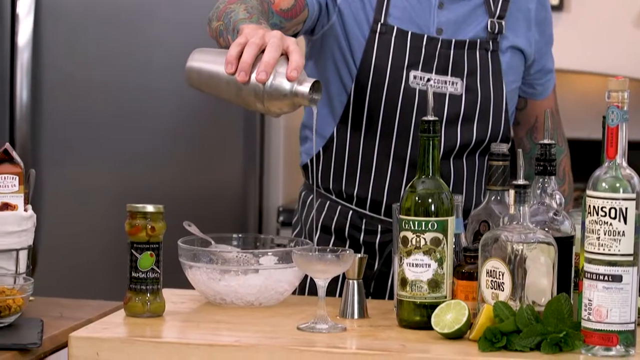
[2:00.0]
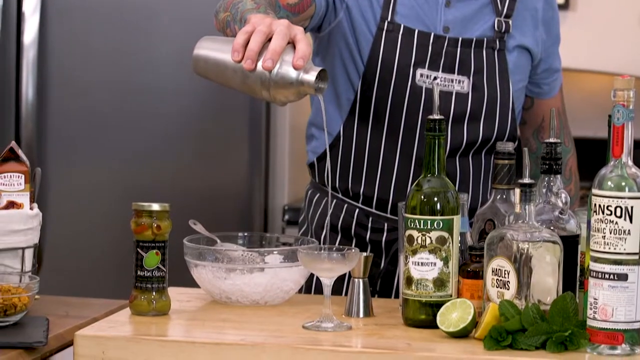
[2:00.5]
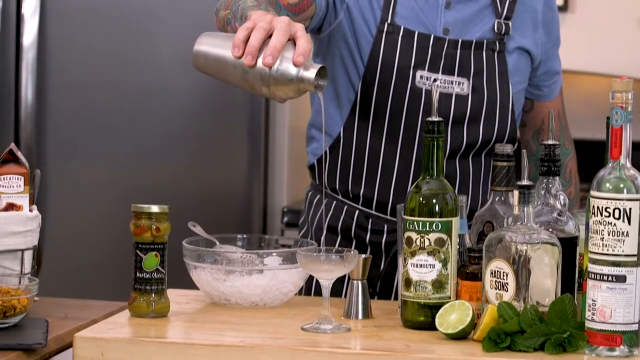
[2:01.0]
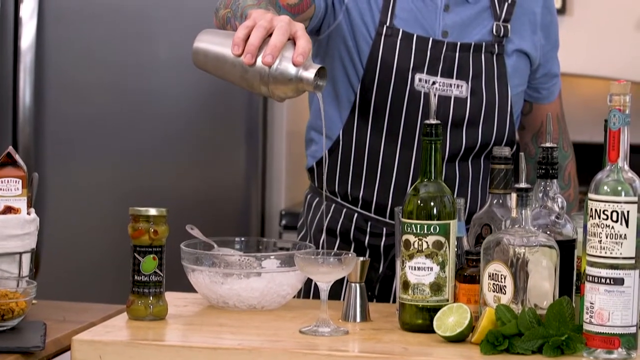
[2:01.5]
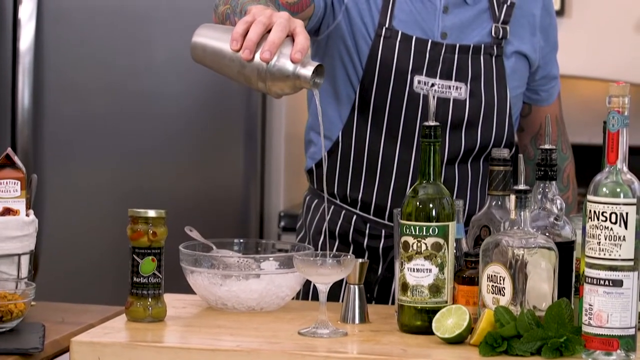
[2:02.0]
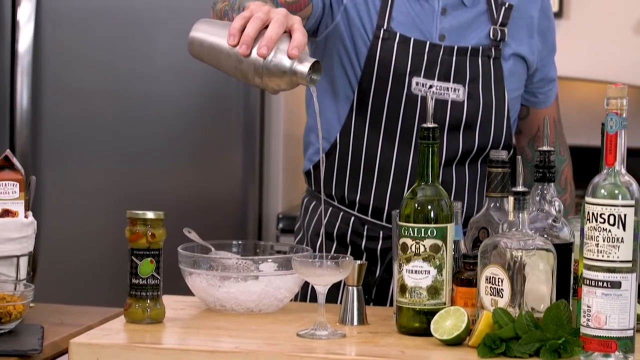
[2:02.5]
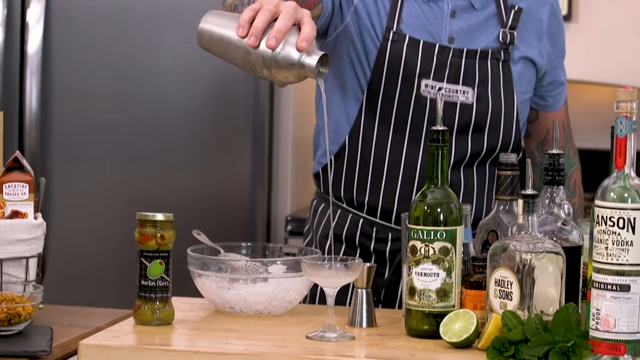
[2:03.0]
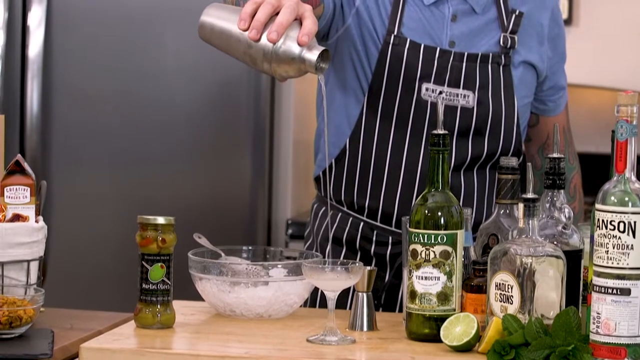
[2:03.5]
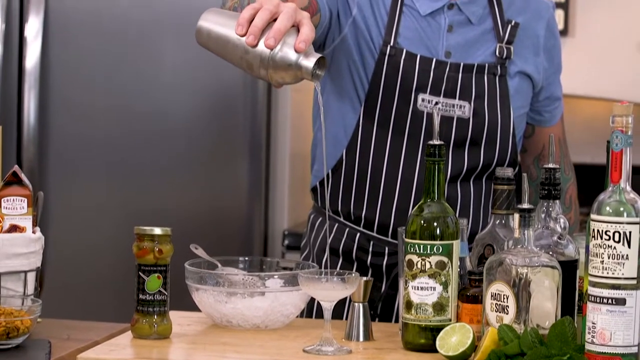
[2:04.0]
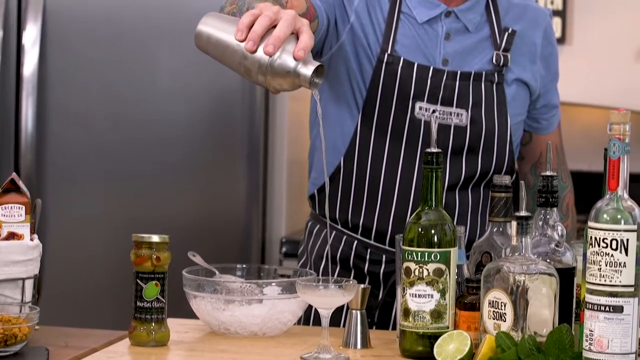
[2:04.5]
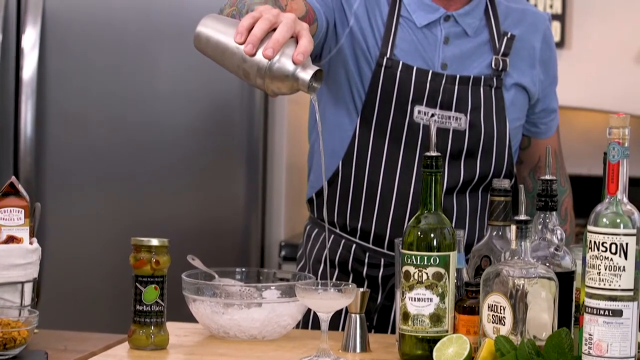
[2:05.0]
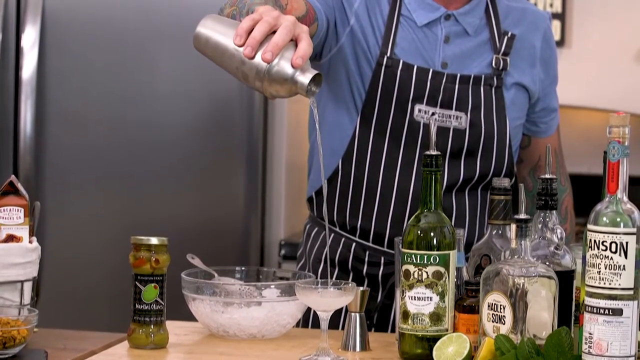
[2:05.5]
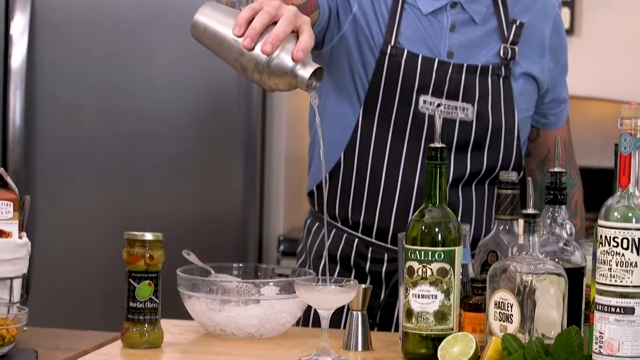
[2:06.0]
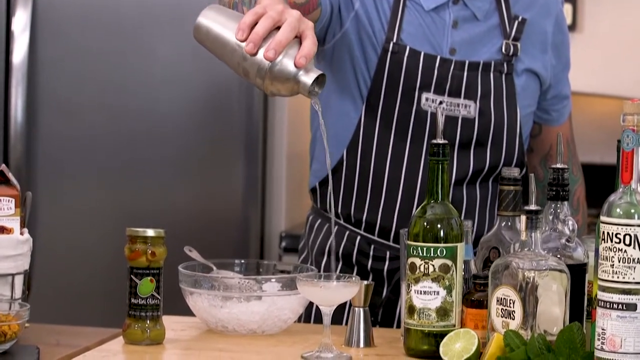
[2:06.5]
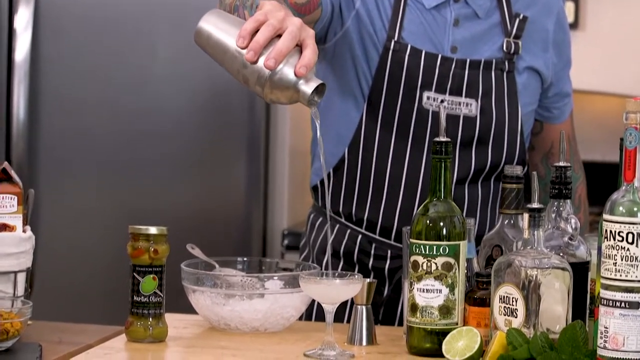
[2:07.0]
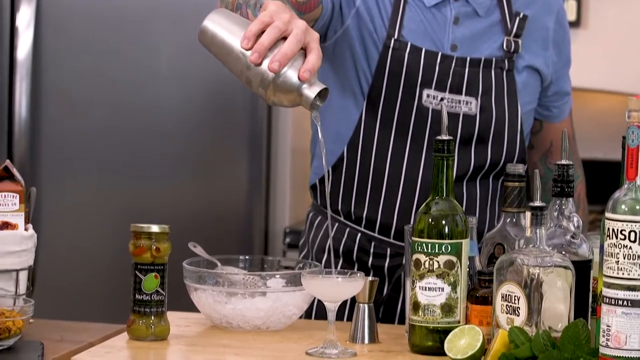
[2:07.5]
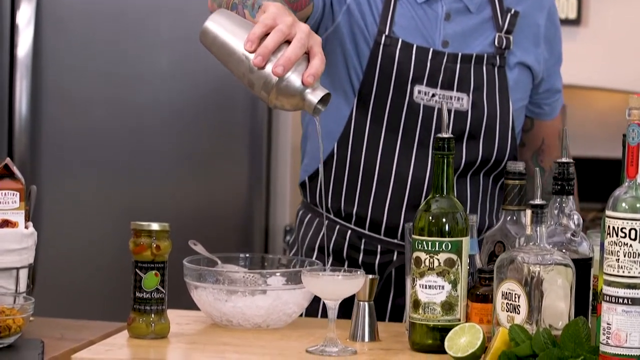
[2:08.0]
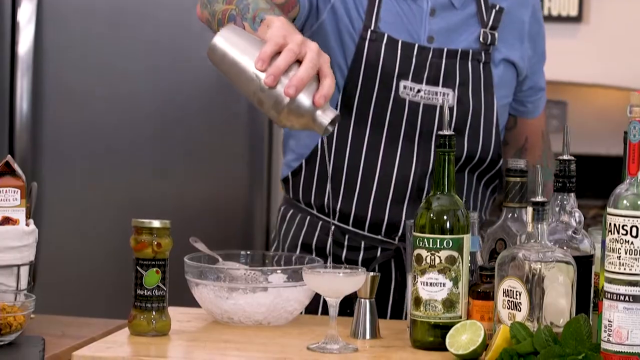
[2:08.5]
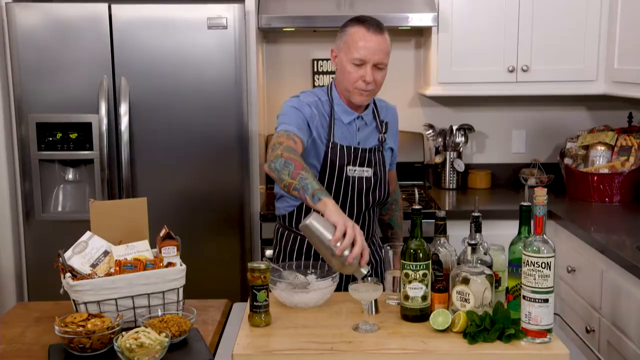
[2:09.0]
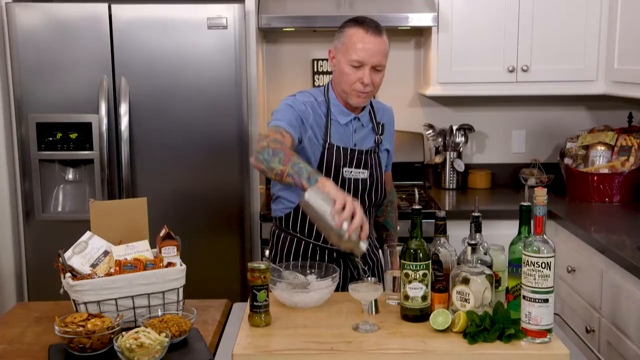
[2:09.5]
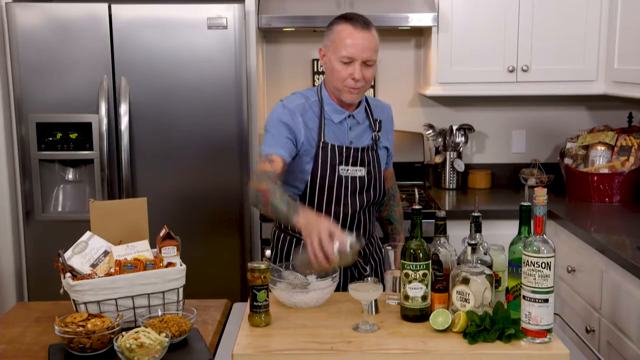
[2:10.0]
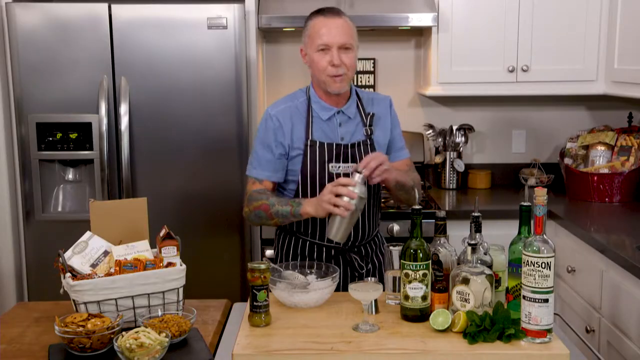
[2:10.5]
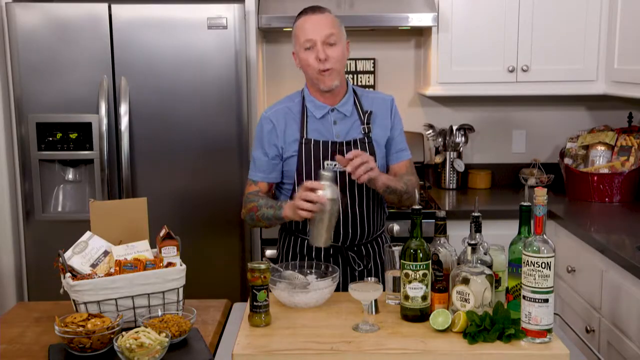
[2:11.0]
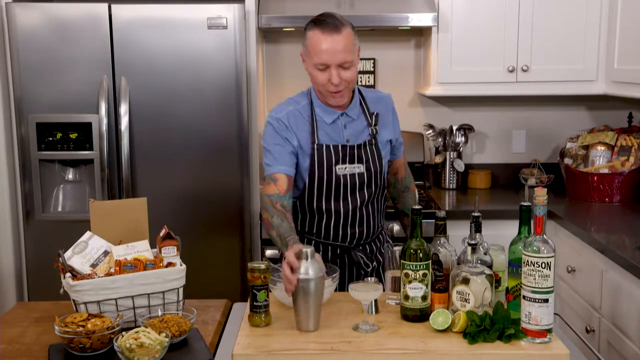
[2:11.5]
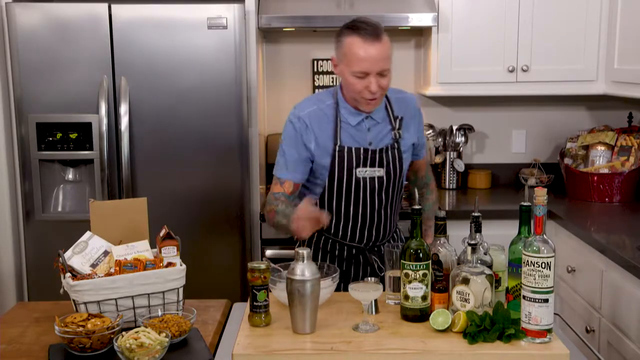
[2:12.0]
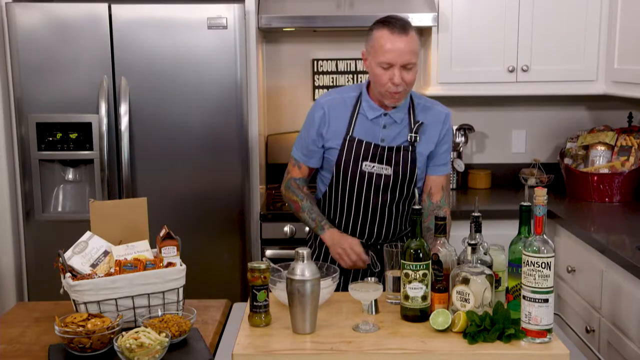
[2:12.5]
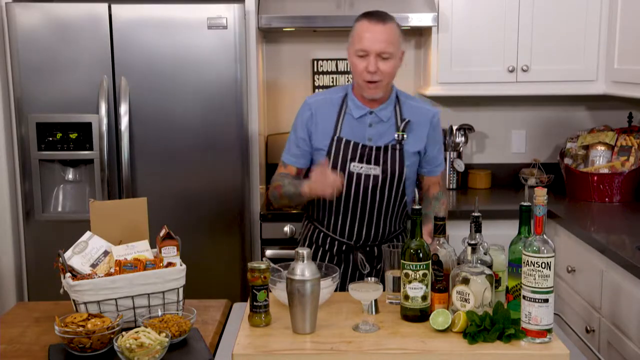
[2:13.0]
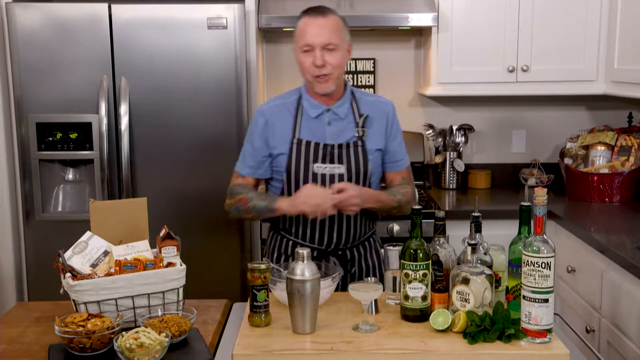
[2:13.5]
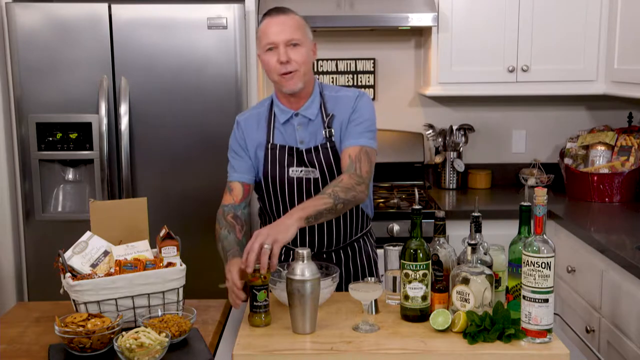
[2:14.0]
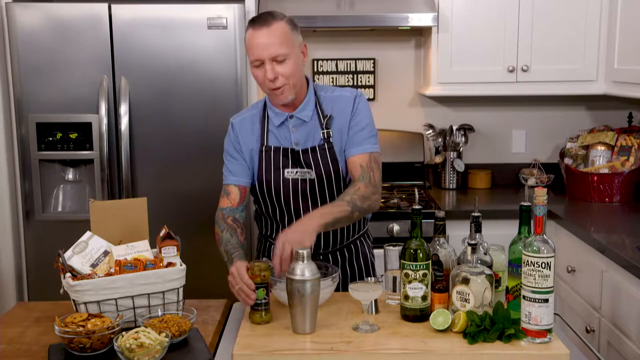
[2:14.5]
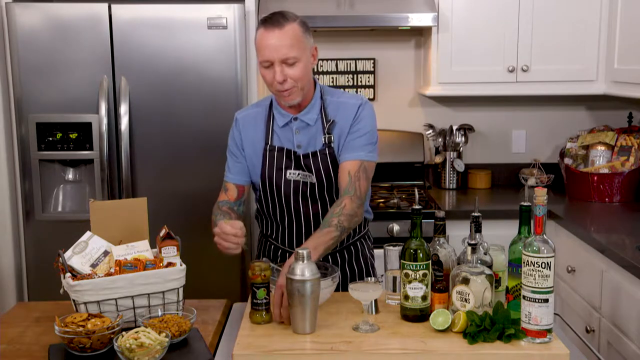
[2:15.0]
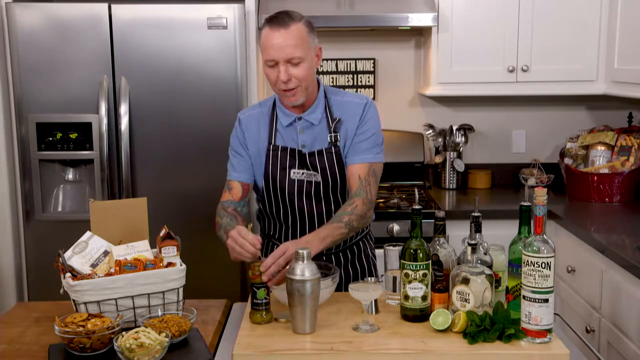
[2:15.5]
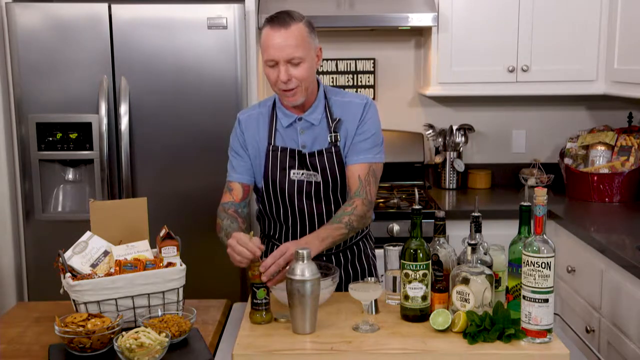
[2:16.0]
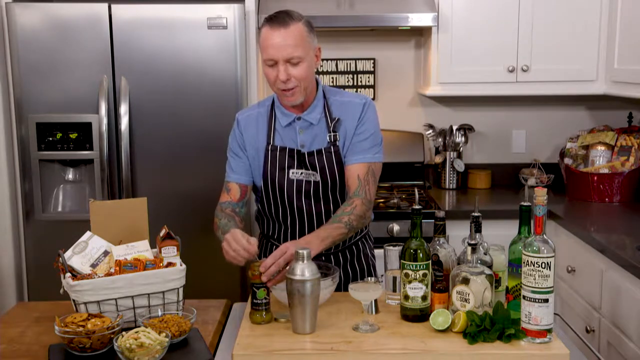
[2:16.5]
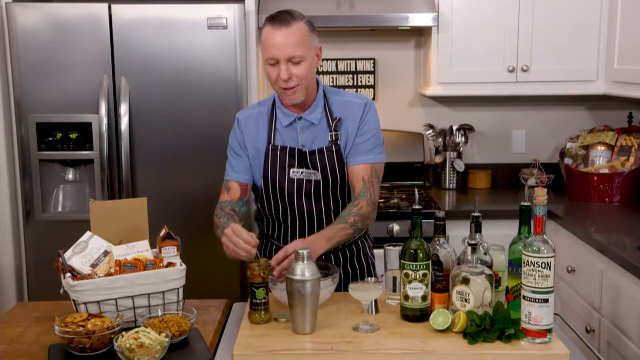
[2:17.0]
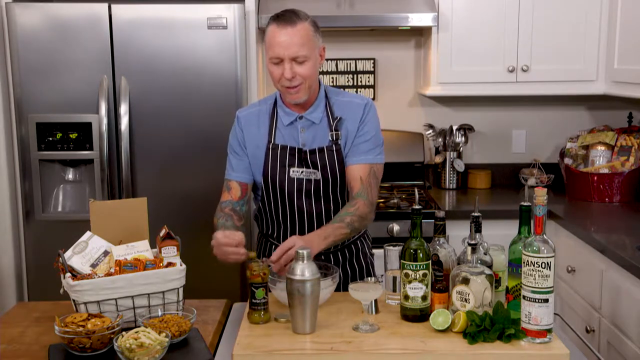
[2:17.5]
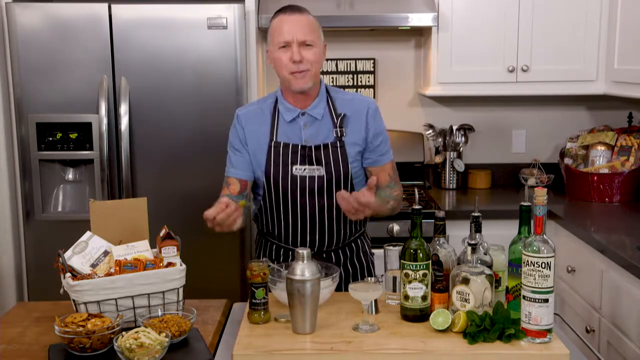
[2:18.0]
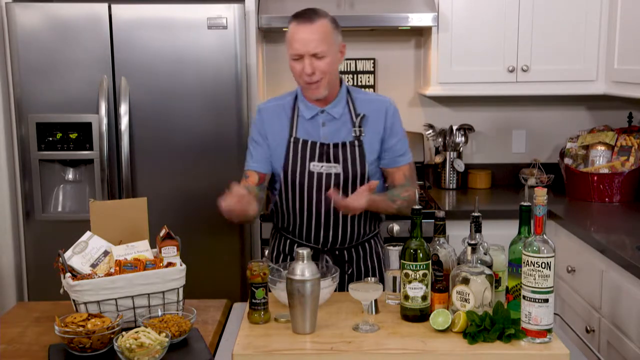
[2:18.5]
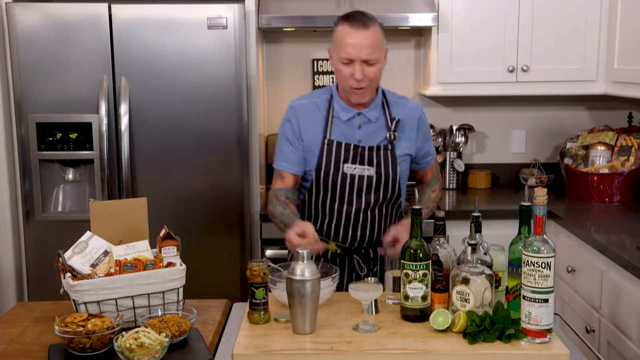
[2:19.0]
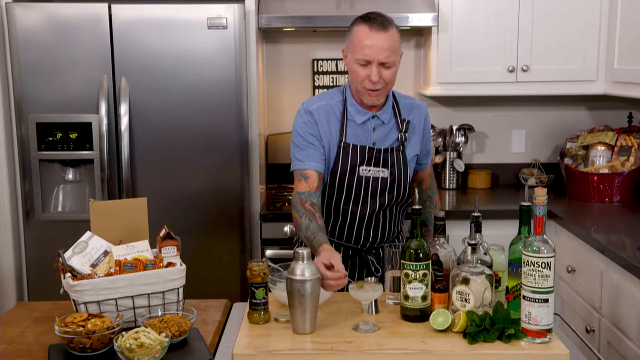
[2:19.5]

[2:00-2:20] The man holds the bottle and pours from it into the cocktail glass, which earlier held the ice mixed with water or gin. A silver tablespoon he used to scoop the ice is by the ice bowl, and ice is still in the bowl. After pouring from the silver jar, he takes a very small spoon, smaller than a teaspoon, scoops from the jar with the green contents that look like vegetables, and puts it into the cocktail.